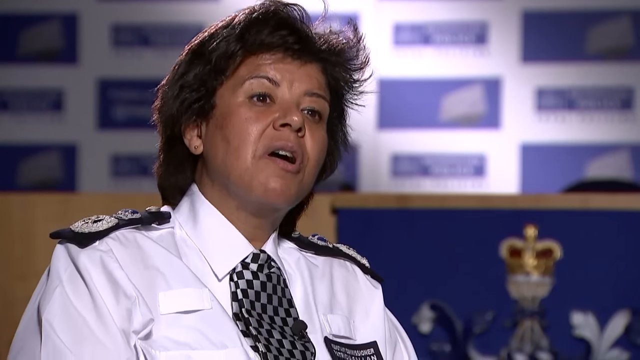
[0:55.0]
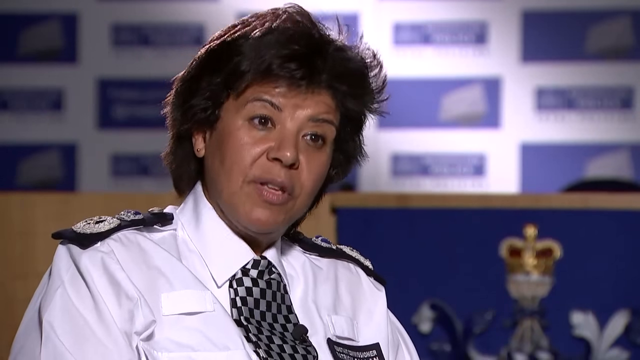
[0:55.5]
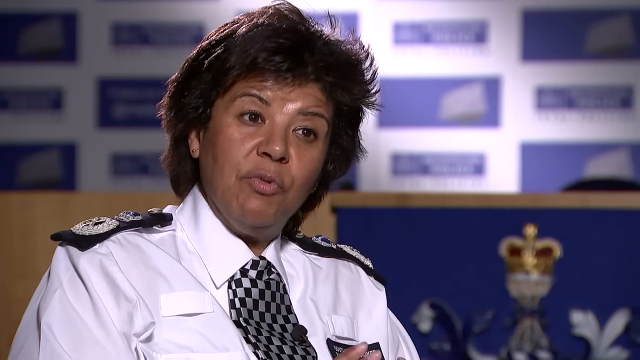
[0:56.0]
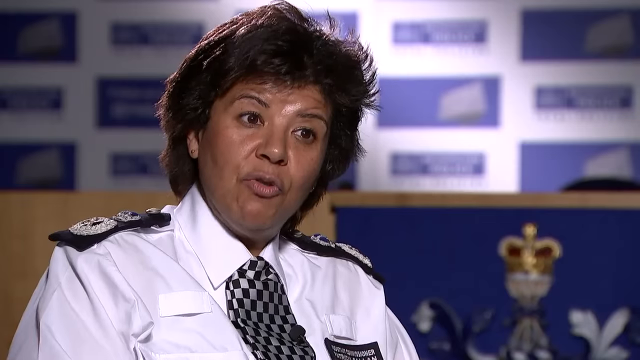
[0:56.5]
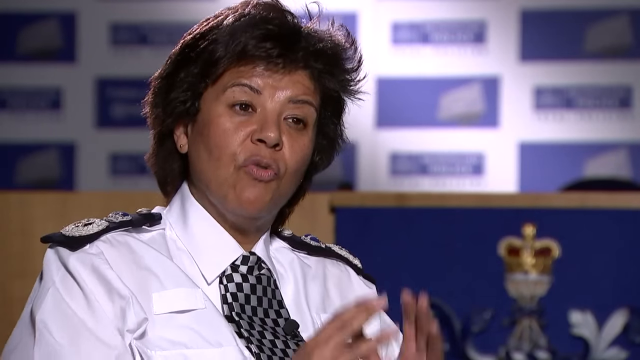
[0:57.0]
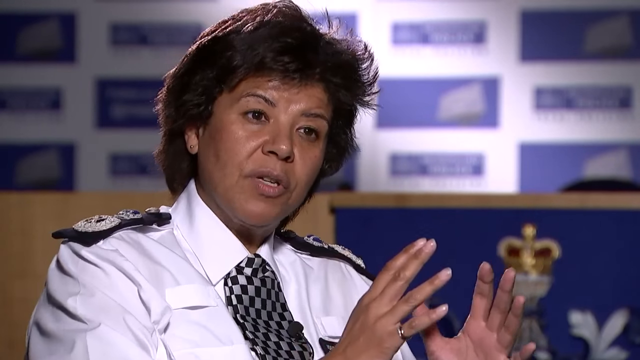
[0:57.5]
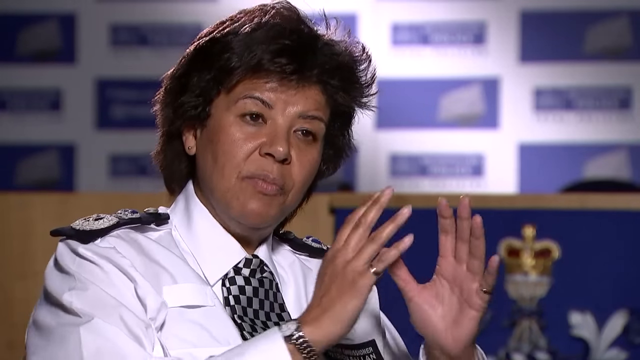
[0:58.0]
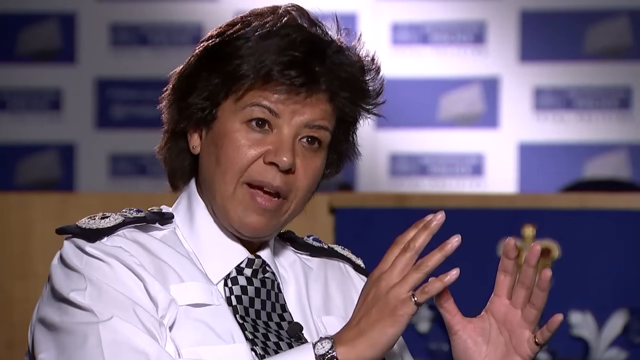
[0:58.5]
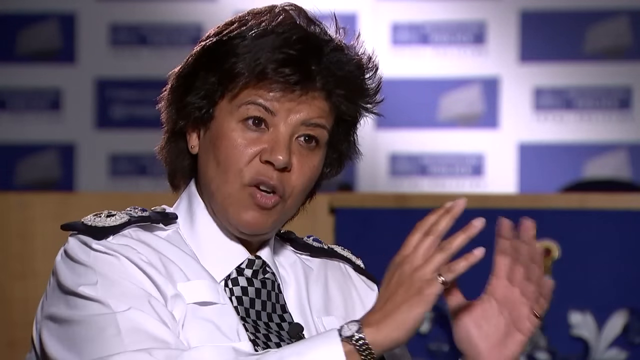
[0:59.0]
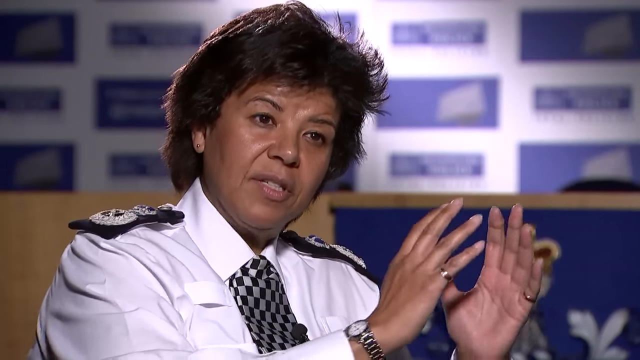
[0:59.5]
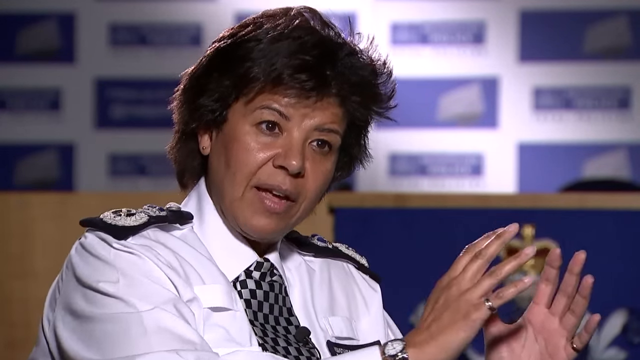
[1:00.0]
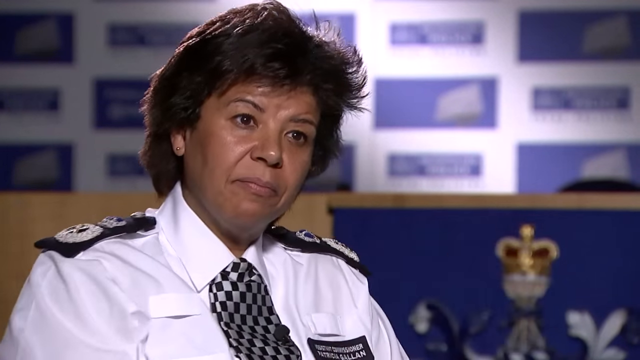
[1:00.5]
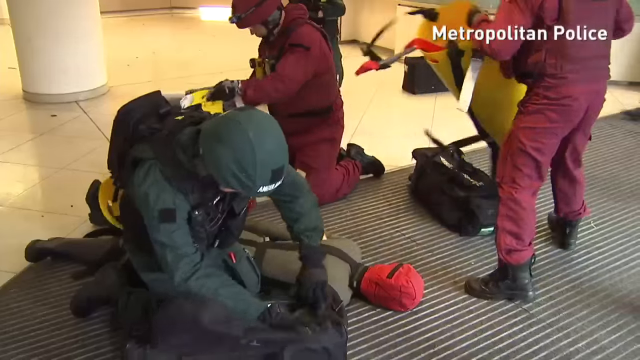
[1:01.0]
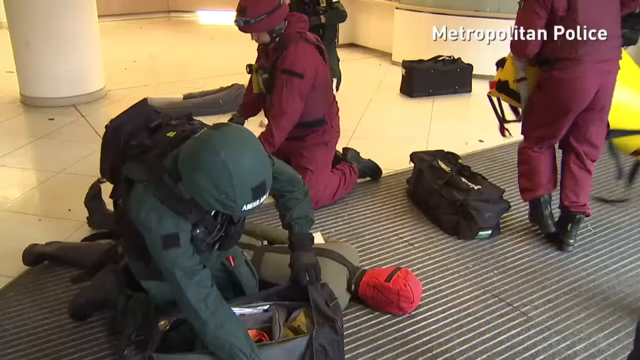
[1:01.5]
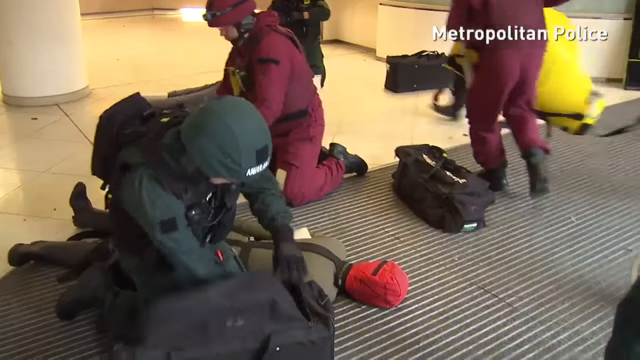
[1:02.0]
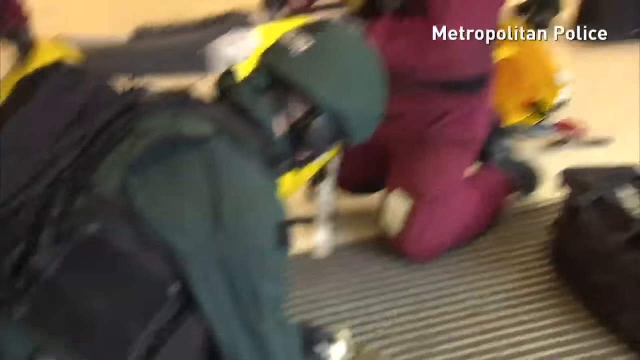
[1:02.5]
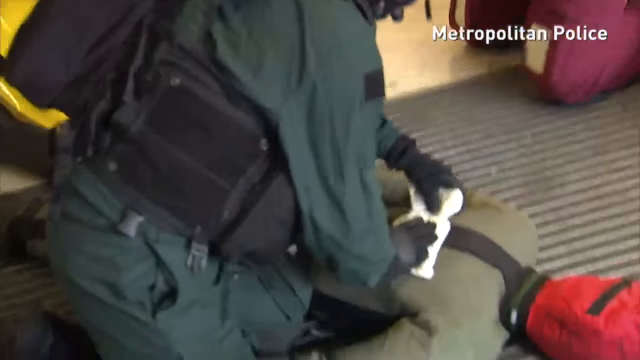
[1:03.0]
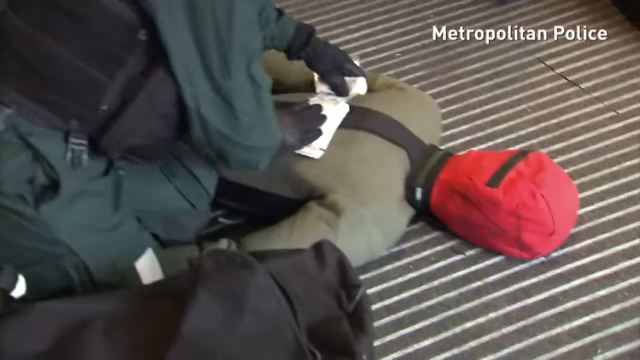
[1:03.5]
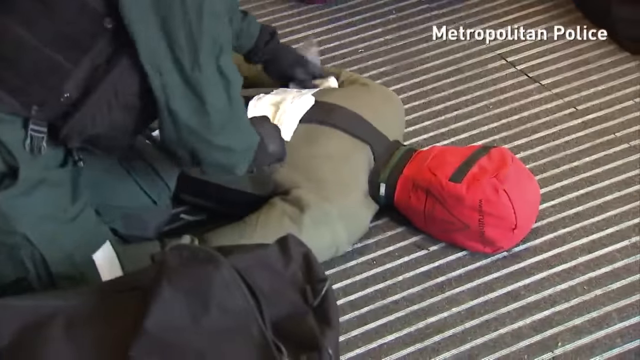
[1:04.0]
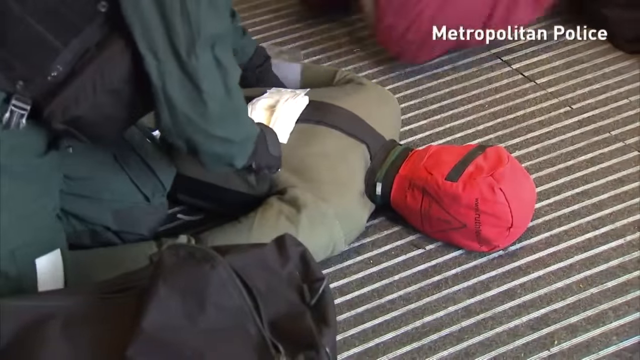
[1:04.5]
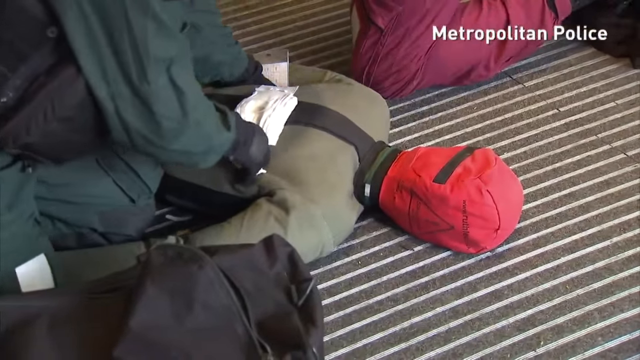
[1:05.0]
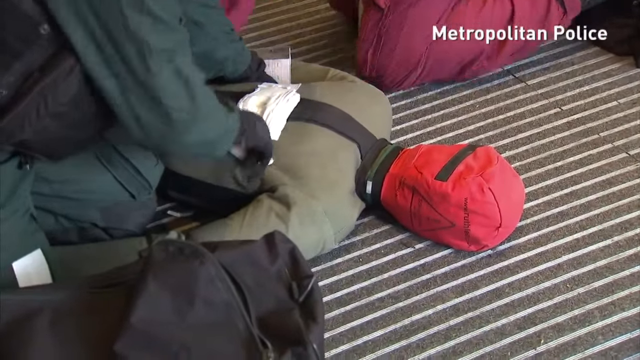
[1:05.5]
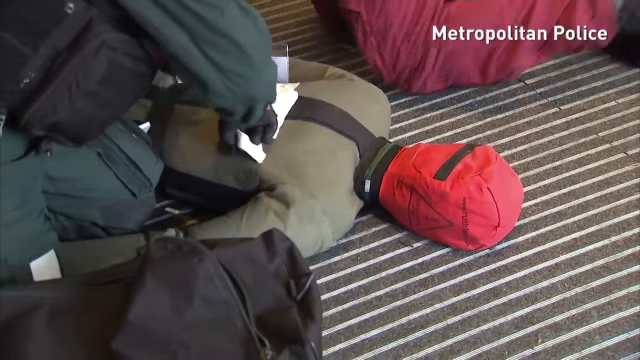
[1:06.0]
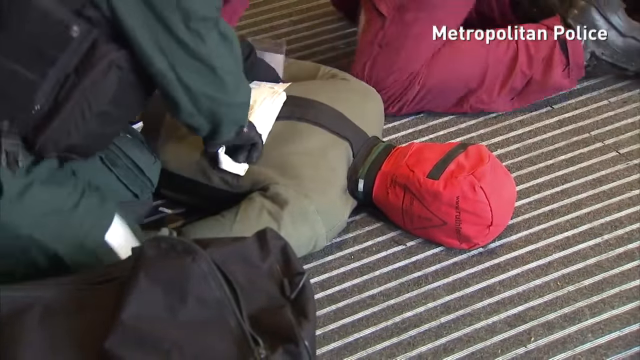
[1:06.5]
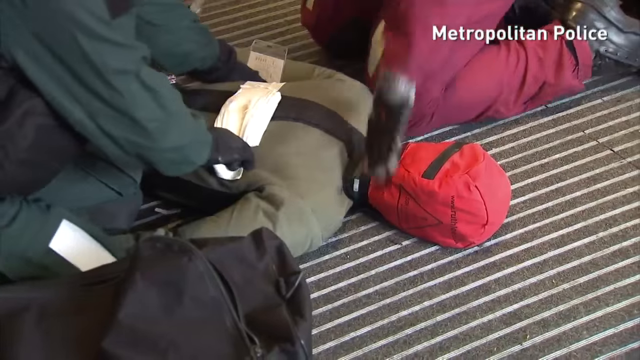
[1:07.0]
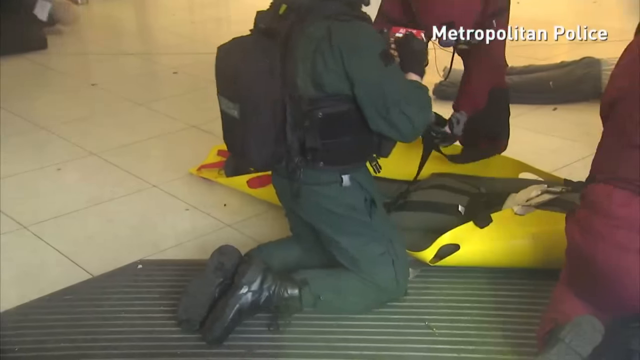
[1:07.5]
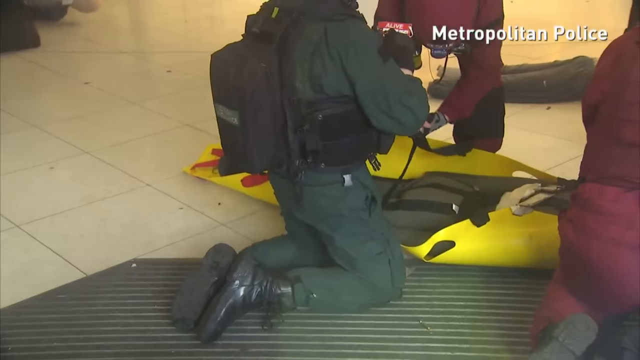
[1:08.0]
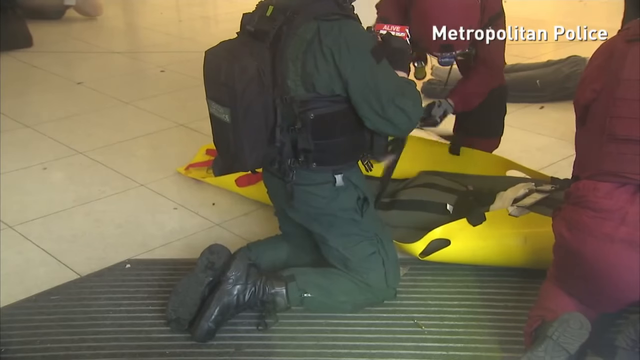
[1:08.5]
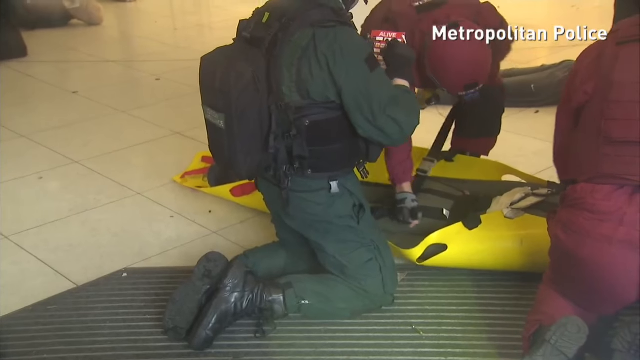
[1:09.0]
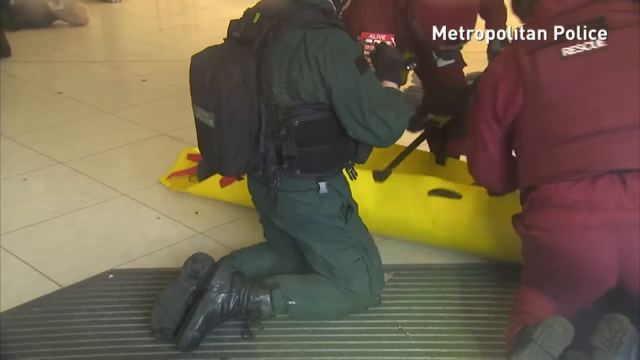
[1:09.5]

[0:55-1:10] The video returns to the training, showing police officers handling the bodies. They are bandaging the bodies, apparently where a wound is supposed to be. People who are apparently already dead are wrapped in a bag, the bag is sealed closed, and the body is carried out.